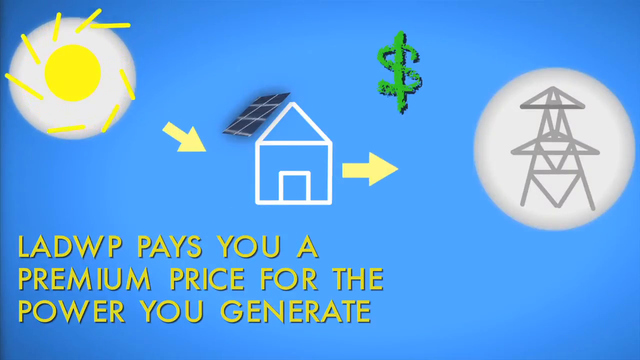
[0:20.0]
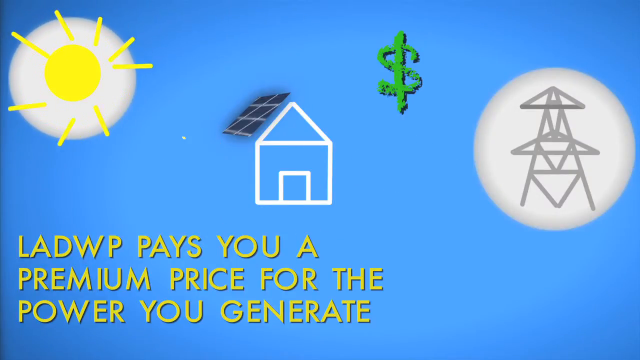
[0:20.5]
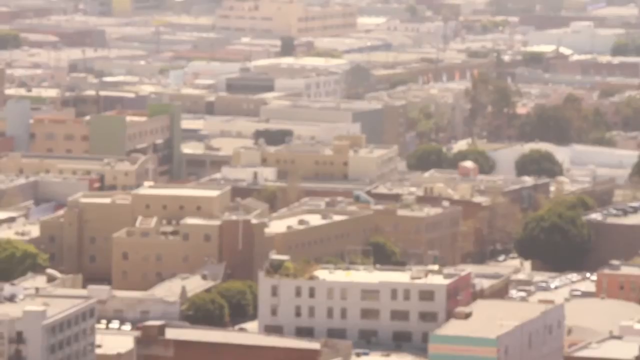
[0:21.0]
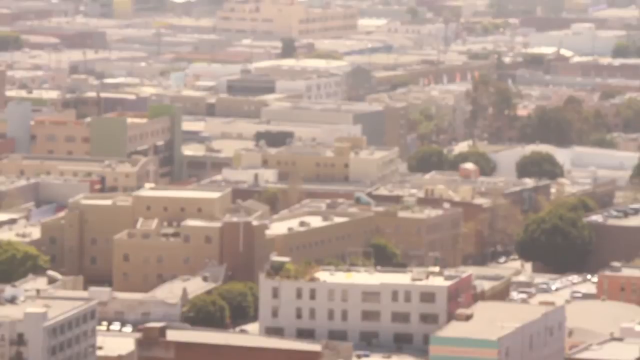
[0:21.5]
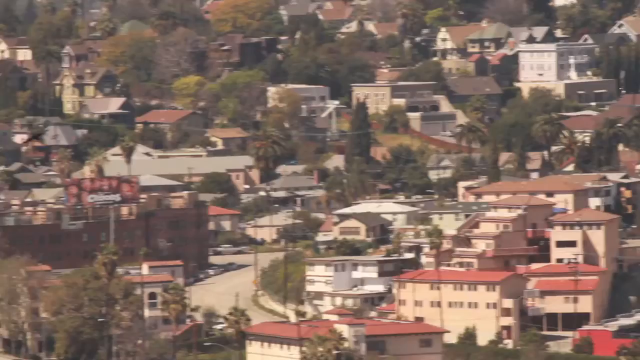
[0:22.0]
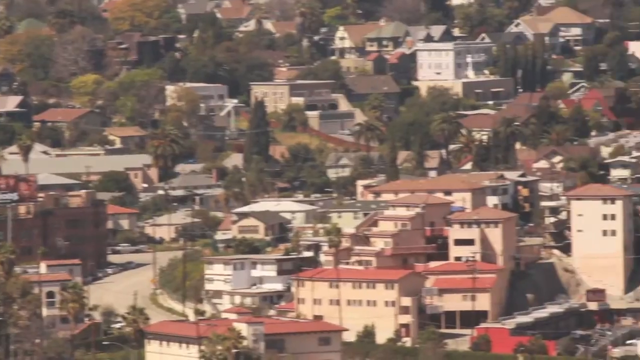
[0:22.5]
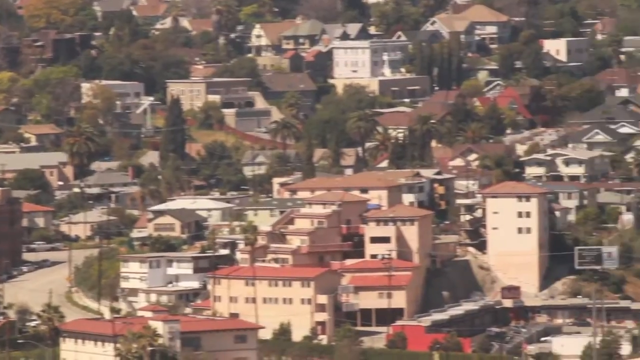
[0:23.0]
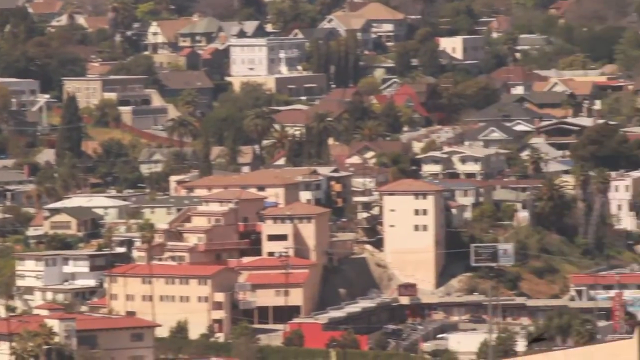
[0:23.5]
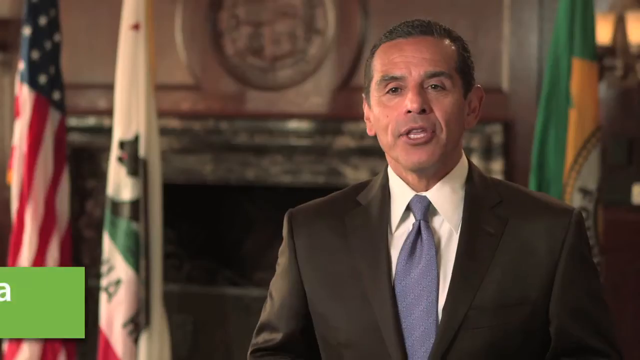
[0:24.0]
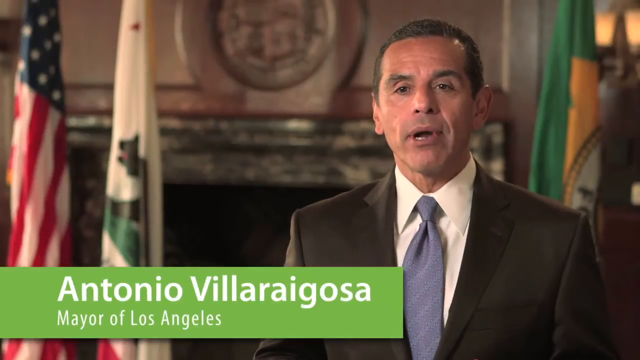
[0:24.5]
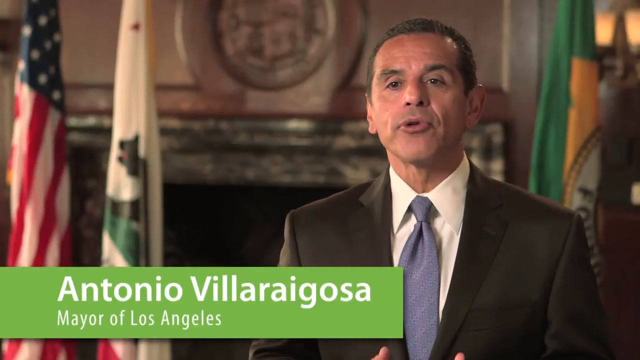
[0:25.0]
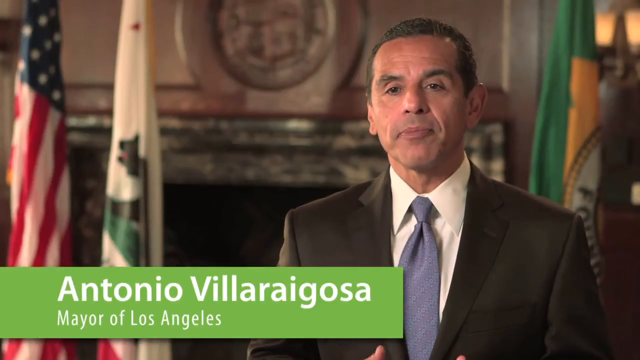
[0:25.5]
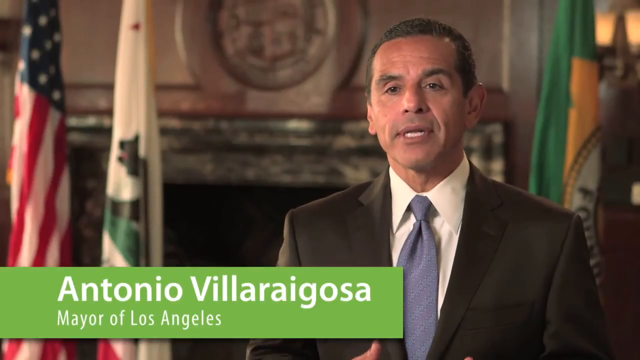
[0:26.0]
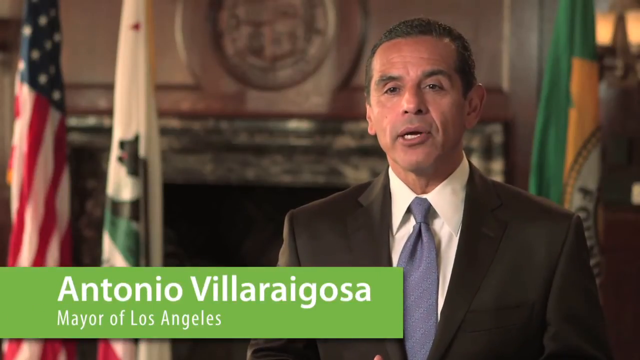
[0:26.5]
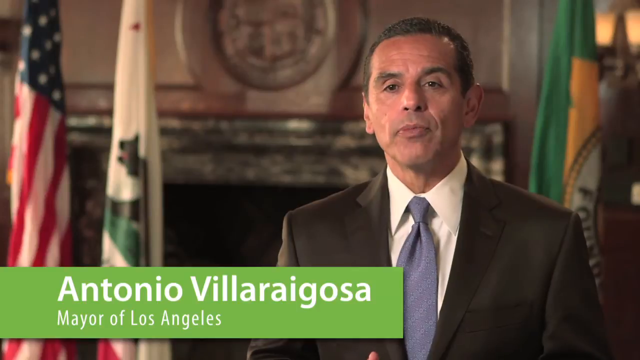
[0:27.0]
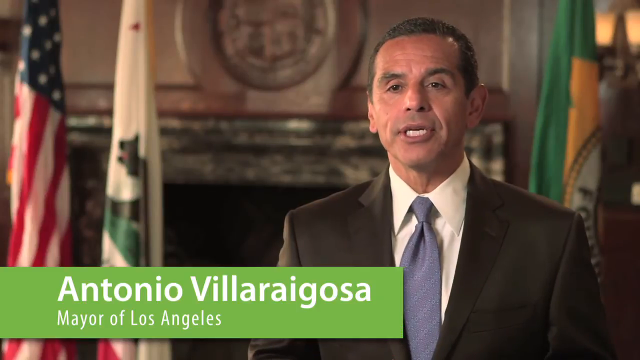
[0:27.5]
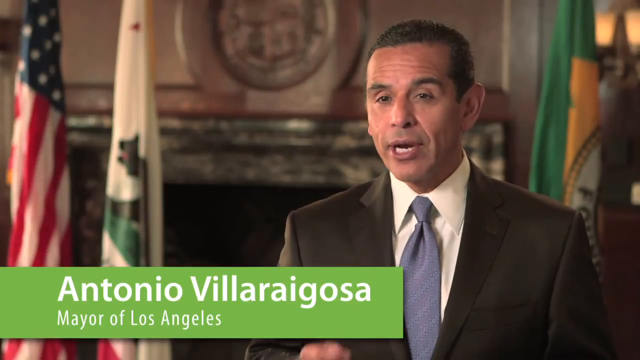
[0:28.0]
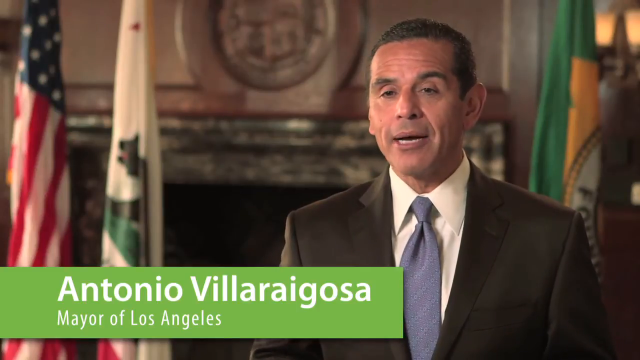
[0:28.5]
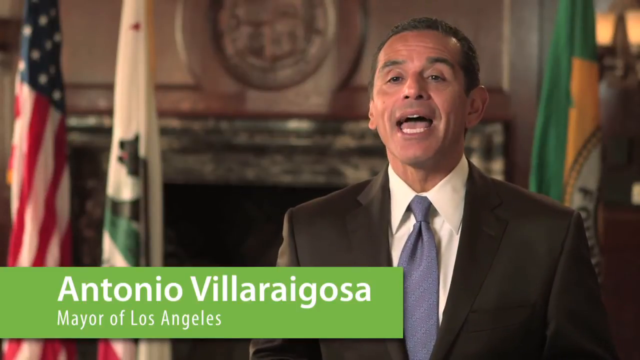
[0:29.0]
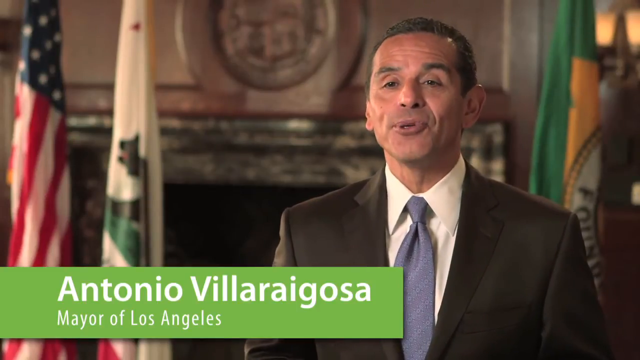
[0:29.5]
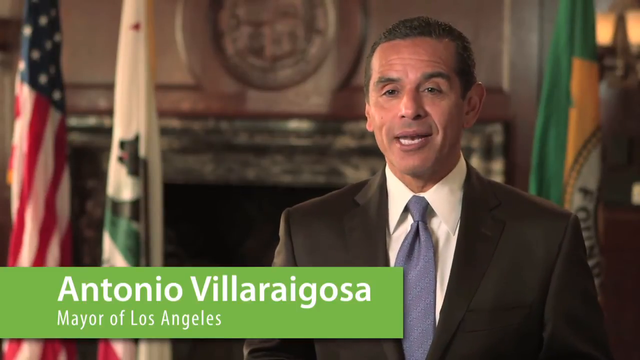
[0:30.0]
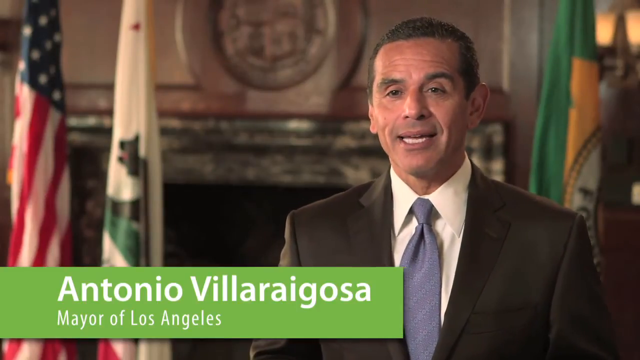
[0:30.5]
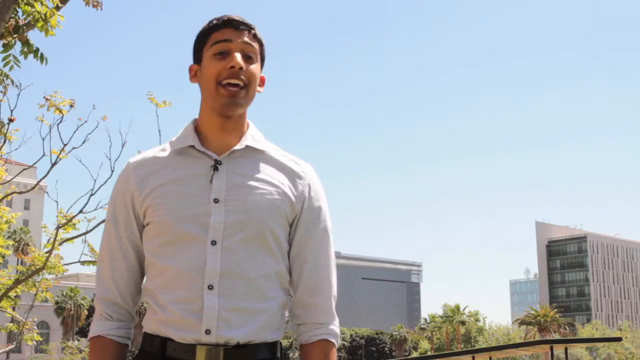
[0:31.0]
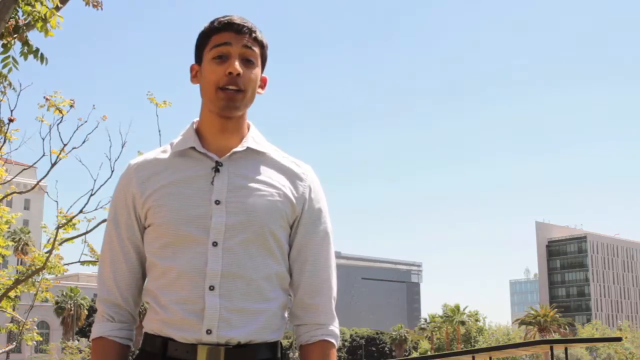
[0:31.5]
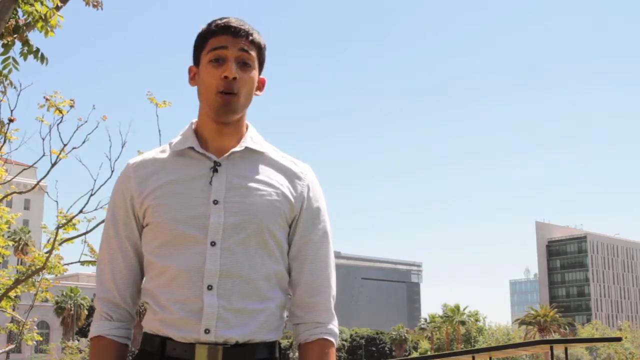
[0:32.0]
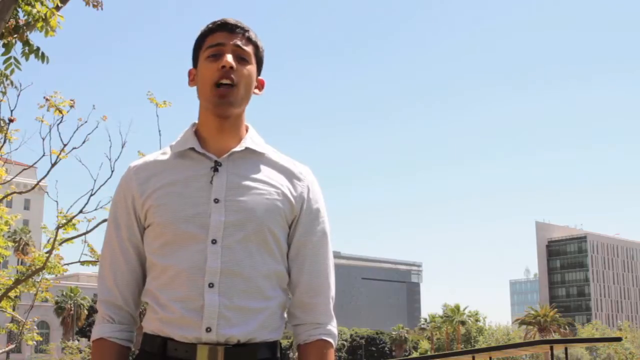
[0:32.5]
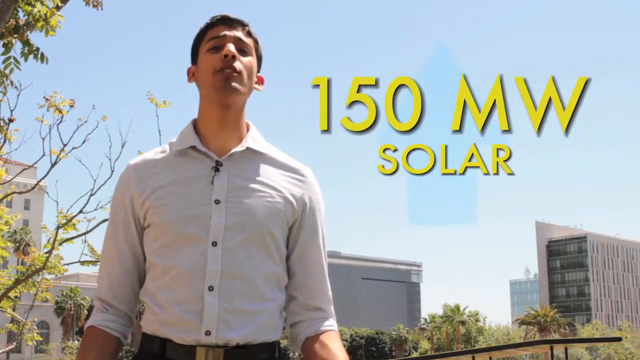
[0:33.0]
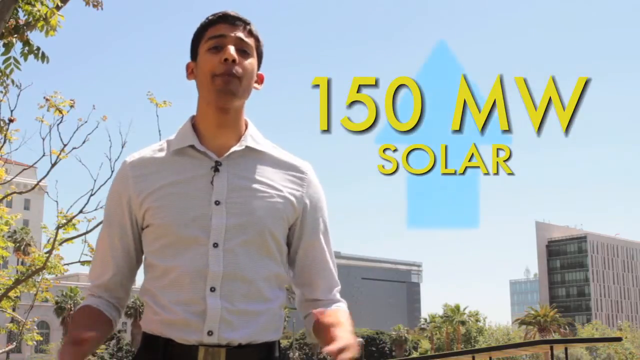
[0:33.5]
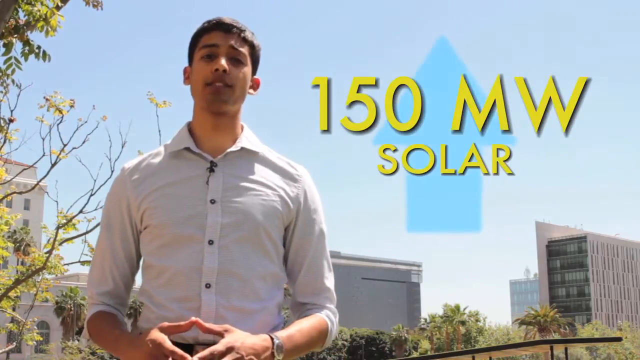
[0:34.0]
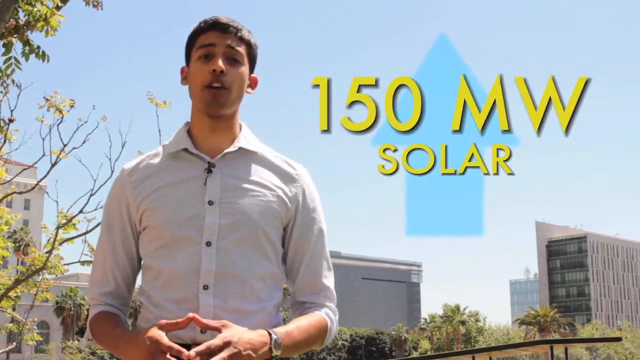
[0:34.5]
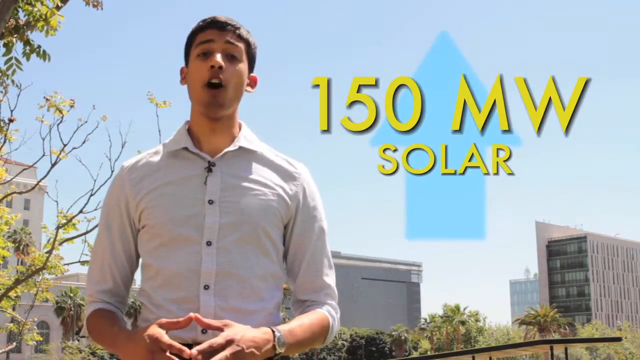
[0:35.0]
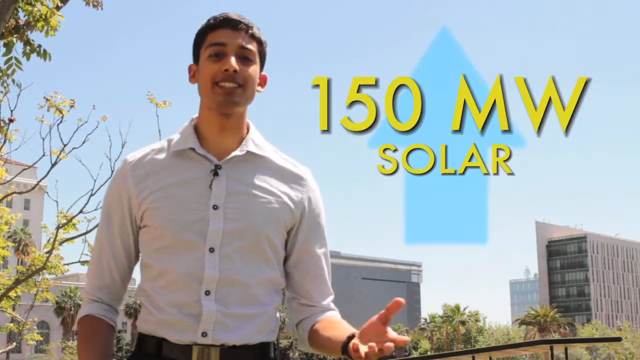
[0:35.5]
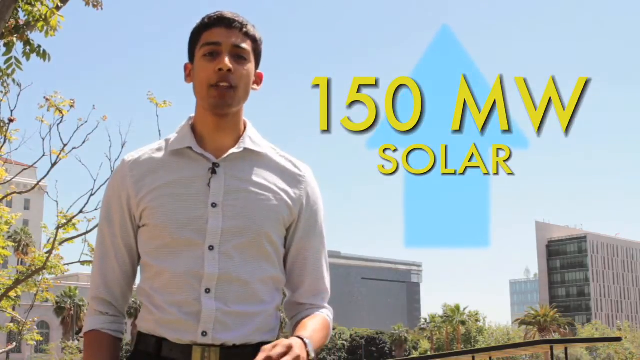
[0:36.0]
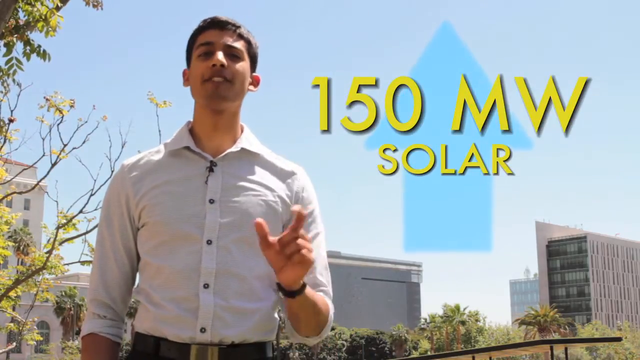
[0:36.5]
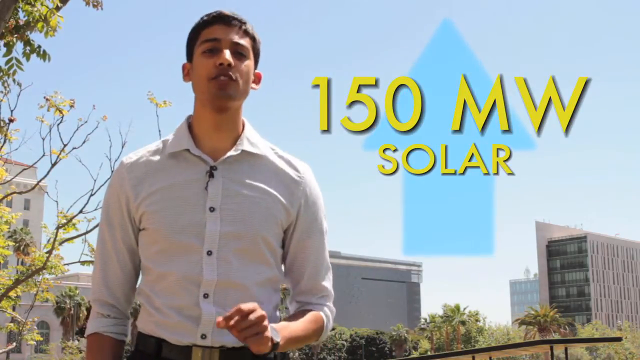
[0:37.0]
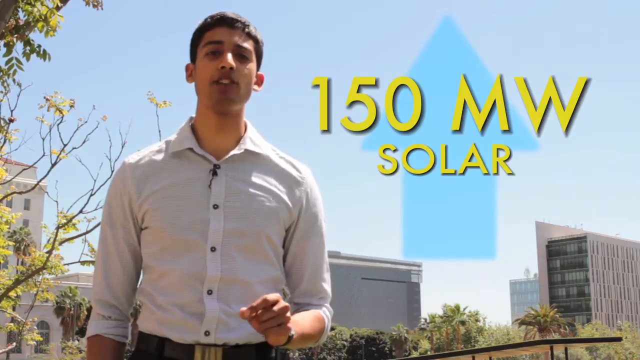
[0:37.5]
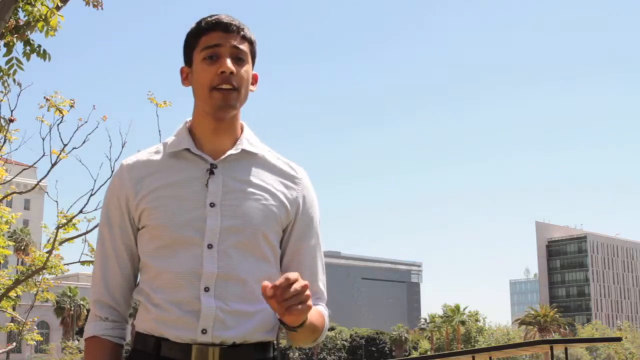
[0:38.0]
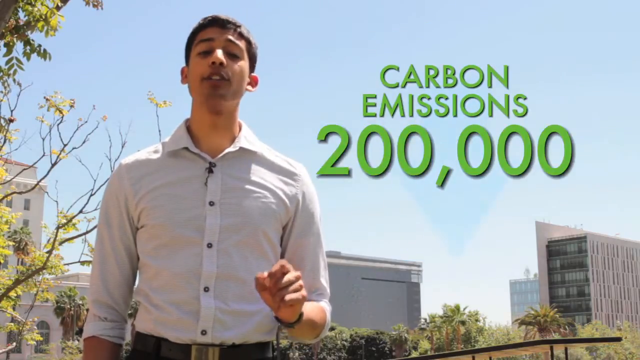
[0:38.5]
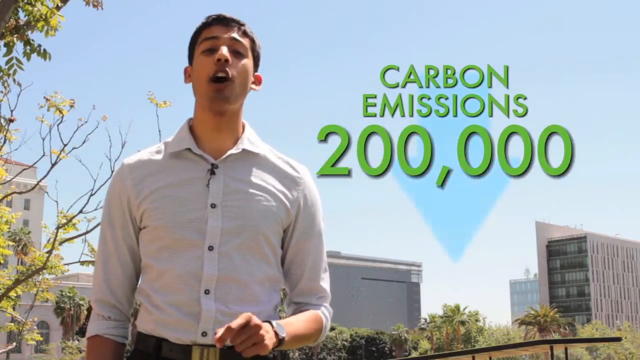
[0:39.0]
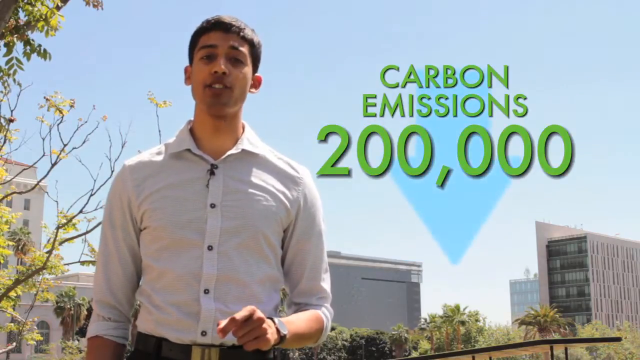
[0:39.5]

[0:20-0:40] An animation plays on a blue background. A drawing of a sun in a white circle is in the top left corner, and a yellow arrow points to a very simple, white hand-drawn house with what looks like a picture of a solar panel on top of it. There is a dollar sign on the right side of the house, and an electric pole on top of a white circle. Yellow text on the screen reads "NWP pays you a premium price for the power you generate". Next comes a close-up view of a city on a sunny day, with many small houses of two or three stories; the camera moves toward the right, showing more houses. Antonio Villariosa, the mayor of Los Angeles, then starts to speak. In a close-up, a man speaks while the camera is positioned low, looking up at him. Behind him is kind of a city background, with trees and branches on his left and on his right, the viewer's left. Text on the screen reads "150 megawatts solar" with a blue up-arrow icon.